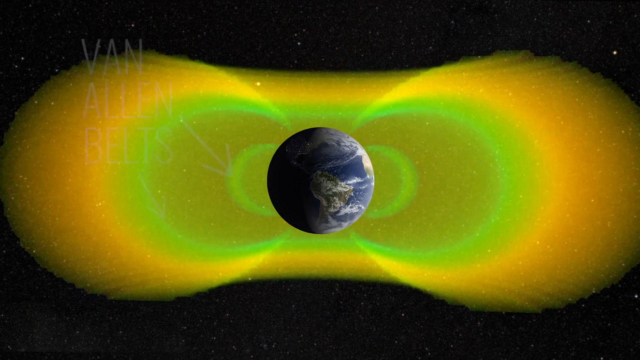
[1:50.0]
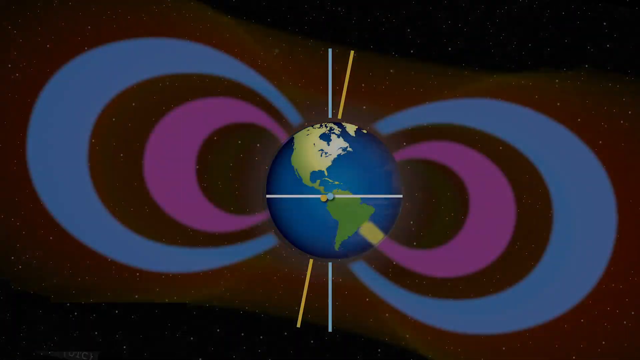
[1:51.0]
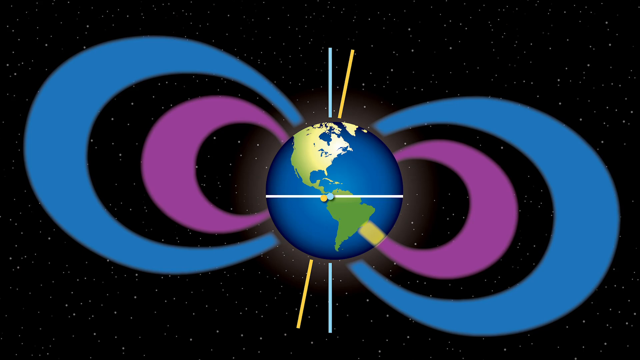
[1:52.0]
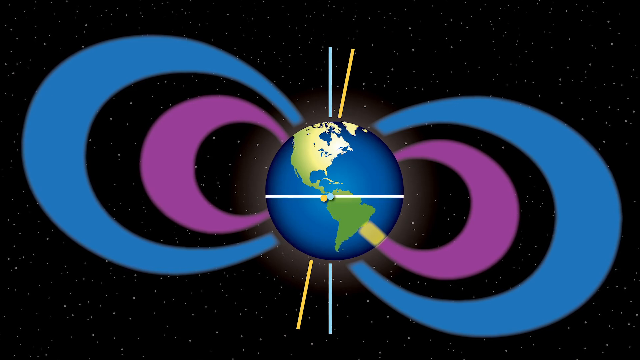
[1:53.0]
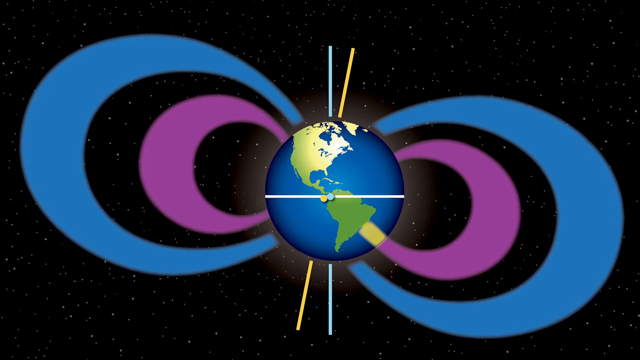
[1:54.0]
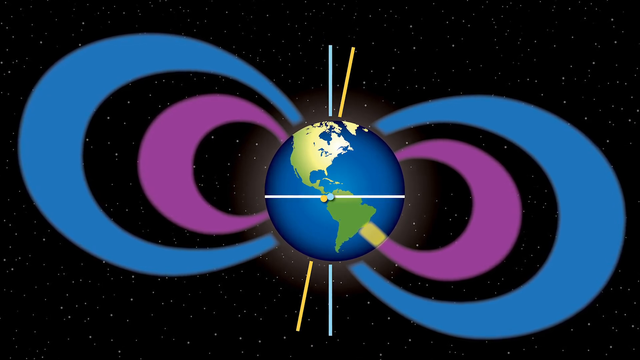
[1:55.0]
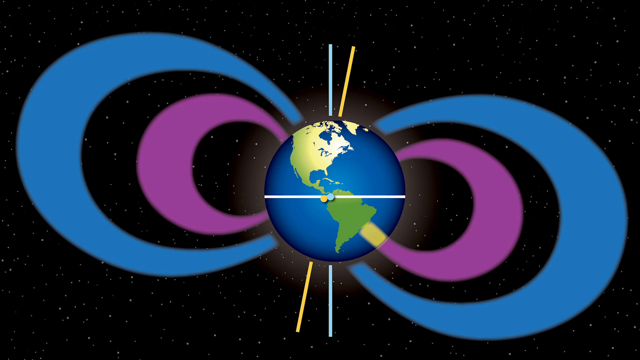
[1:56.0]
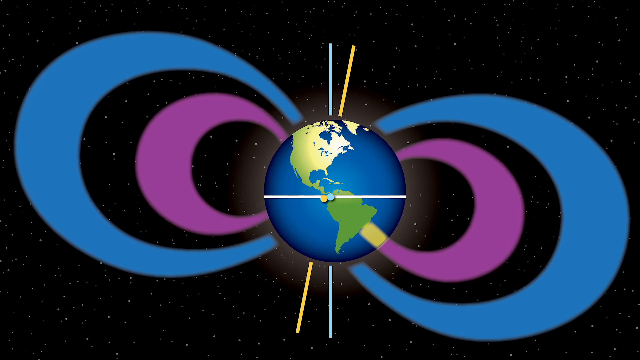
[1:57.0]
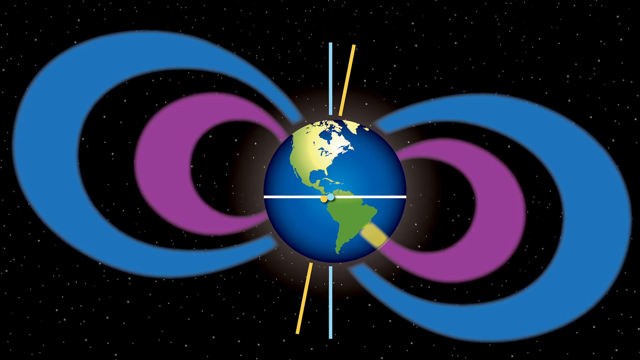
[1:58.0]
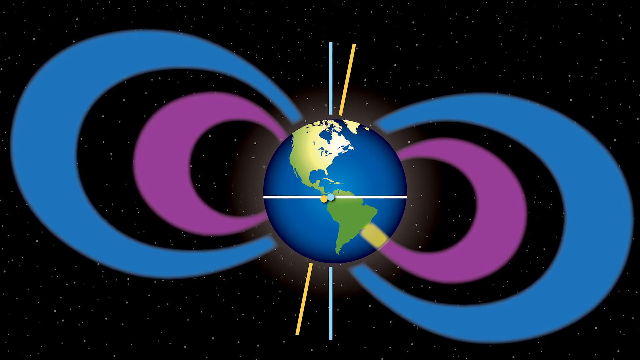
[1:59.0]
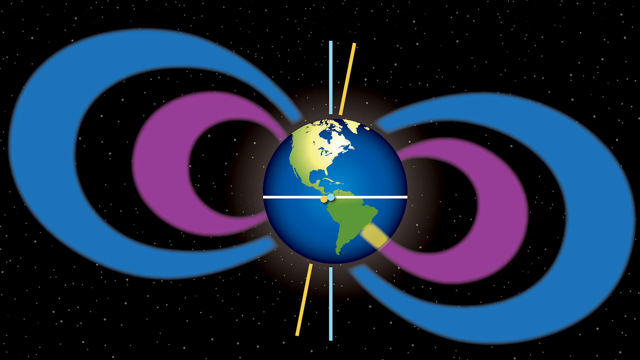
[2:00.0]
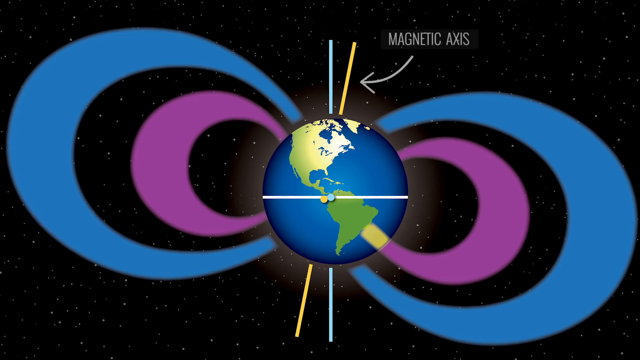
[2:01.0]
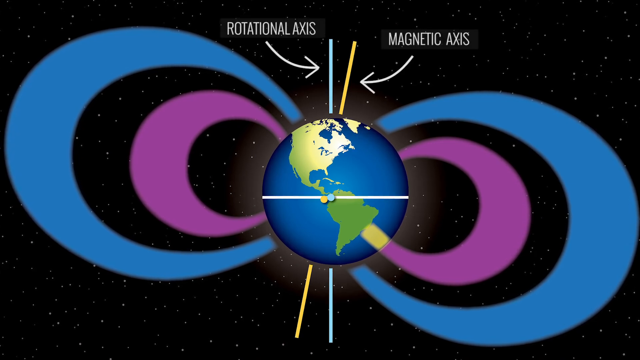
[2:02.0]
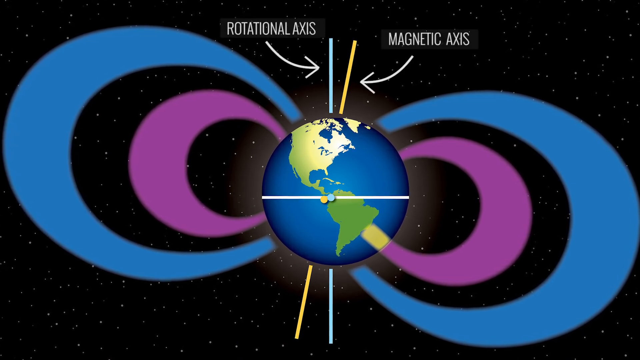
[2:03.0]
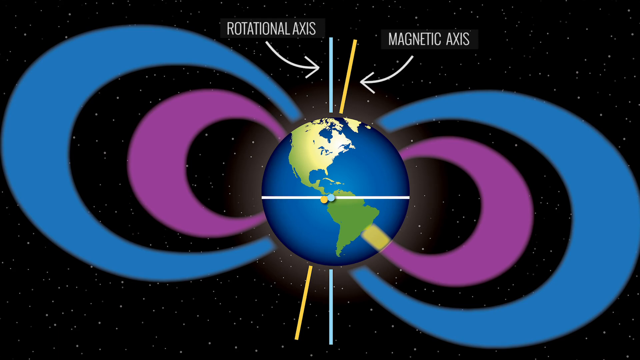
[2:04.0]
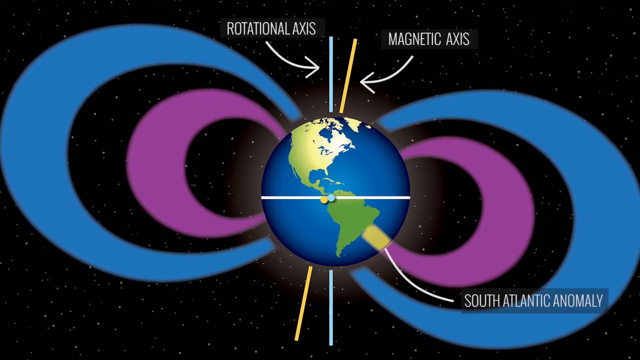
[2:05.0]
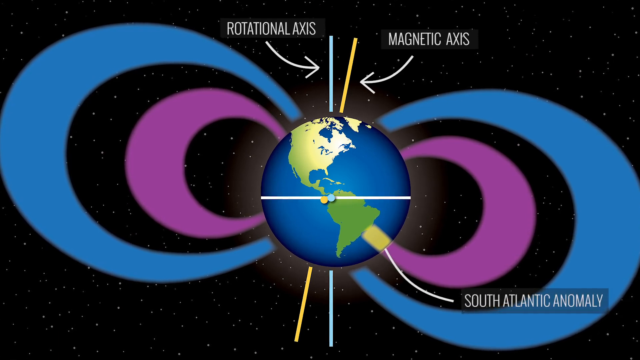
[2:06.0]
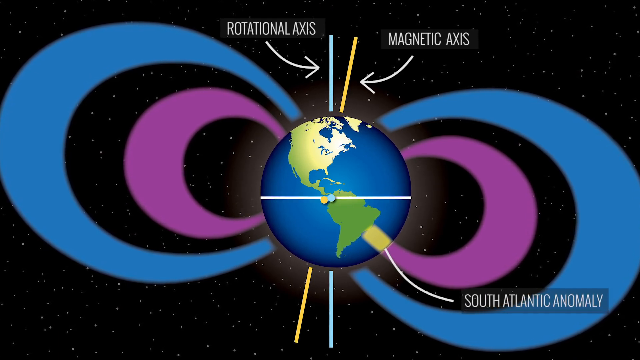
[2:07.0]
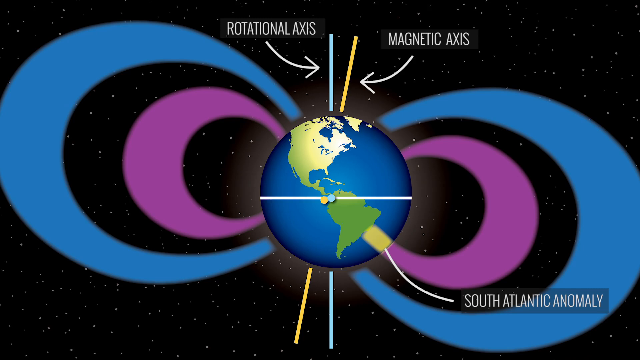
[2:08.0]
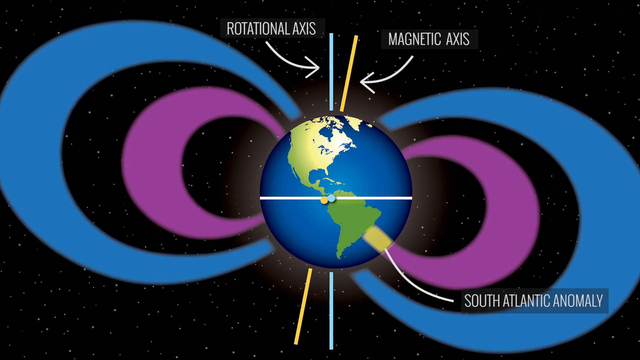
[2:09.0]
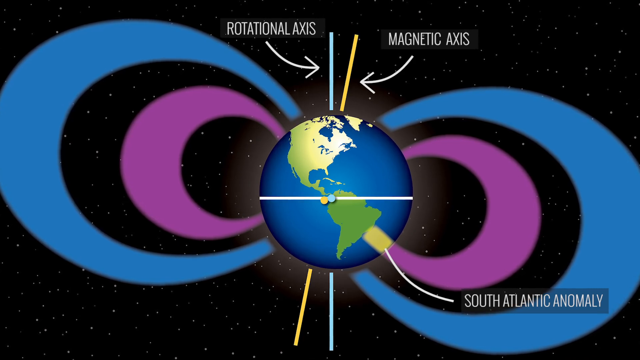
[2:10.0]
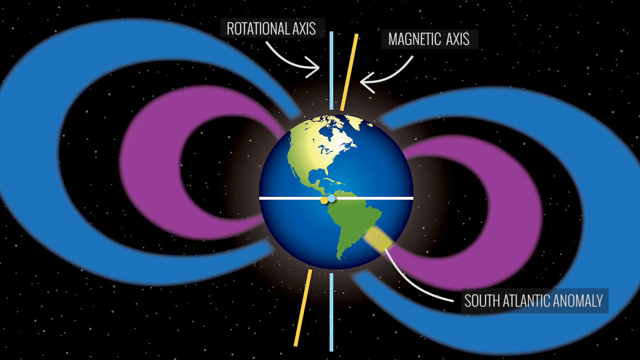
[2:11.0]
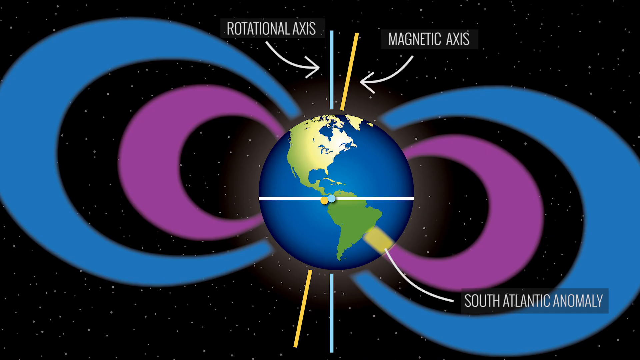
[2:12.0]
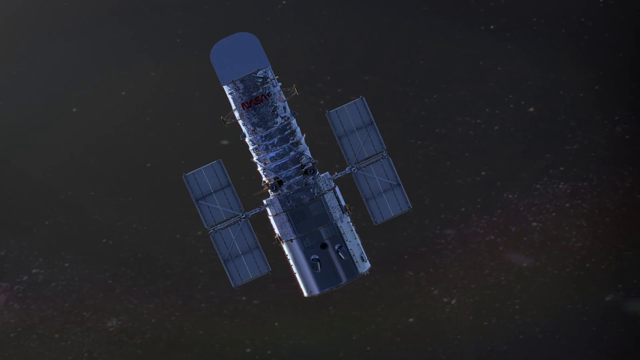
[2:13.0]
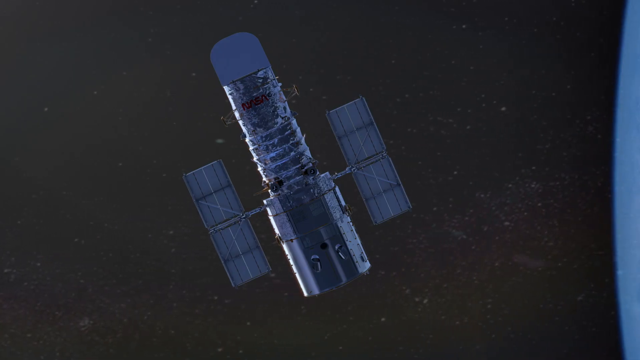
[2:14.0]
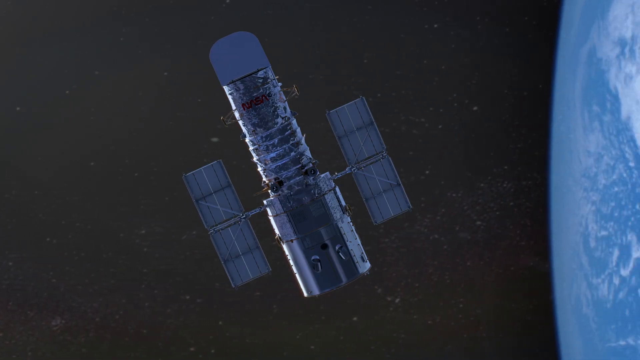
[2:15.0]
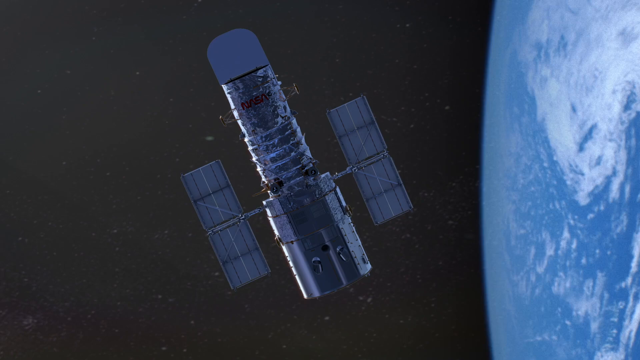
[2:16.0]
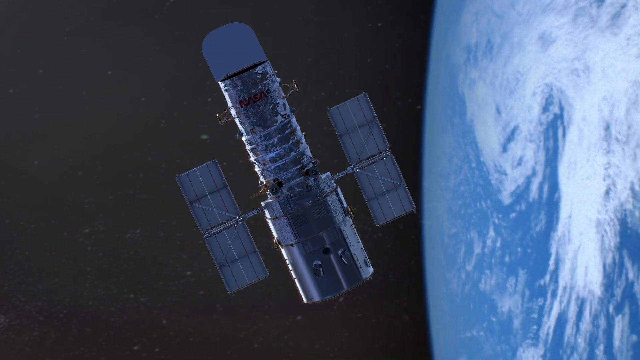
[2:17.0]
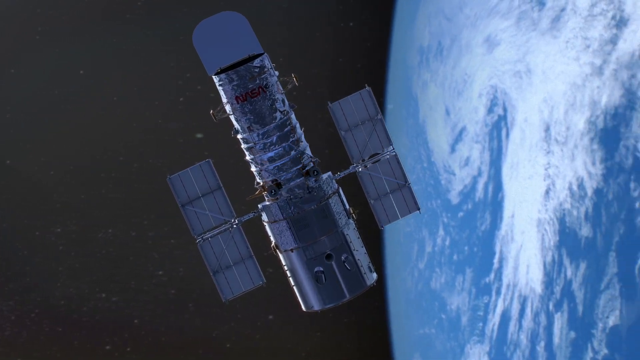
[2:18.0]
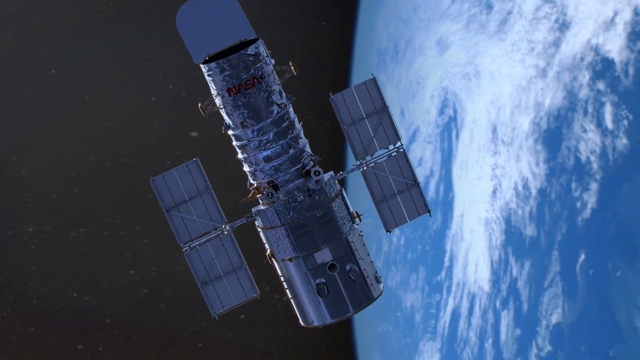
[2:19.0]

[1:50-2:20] Earth is surrounded by a rippling pattern of green and yellow semicircles. The video then moves to a more cartoon interpretation of Earth, focused on North America and South America on a blue ocean. A white horizontal line across the globe shows the equator. At both the North and South Poles there is a blue line and a yellow line: the blue line is straight up and down, and the other is on a slight angle. Two semicircles surround Earth on either side, a purple one and a blue one. The colors become more intense as the video zooms in slightly closer to Earth, and the lines at the poles are now labeled: the straight blue line is "rotational axis" and the angled line is "magnetic axis". An arrow points toward a patch near South America labeled "South Atlantic Anomaly". Next, a satellite floats in space with some faint stars in the background, and the video pans toward the right, showing planet Earth in the background on the right, with blue water and white swirls of clouds in the atmosphere.